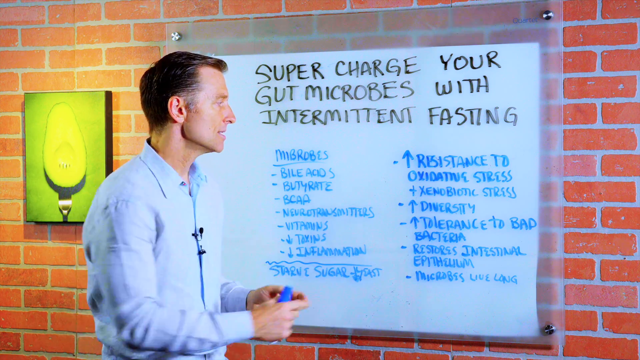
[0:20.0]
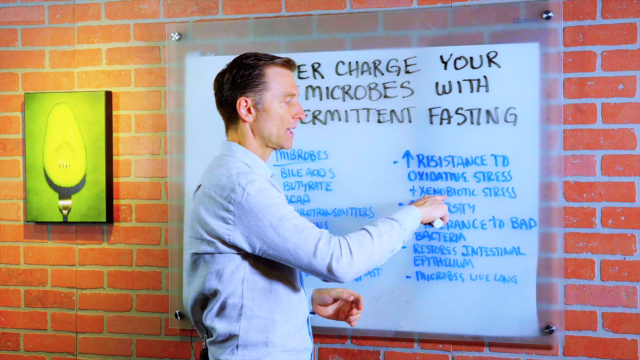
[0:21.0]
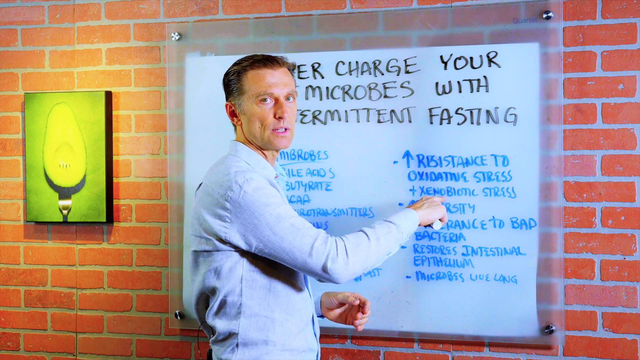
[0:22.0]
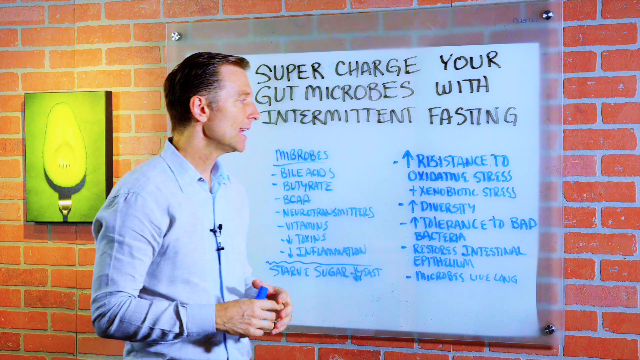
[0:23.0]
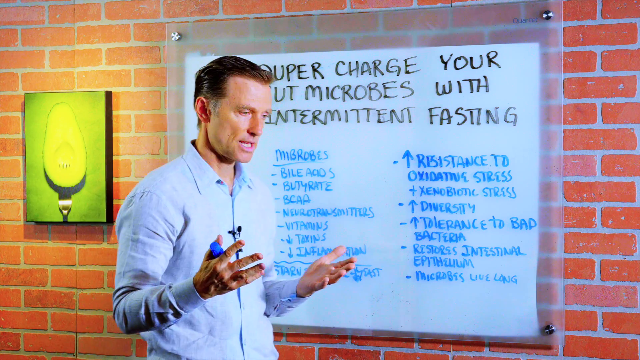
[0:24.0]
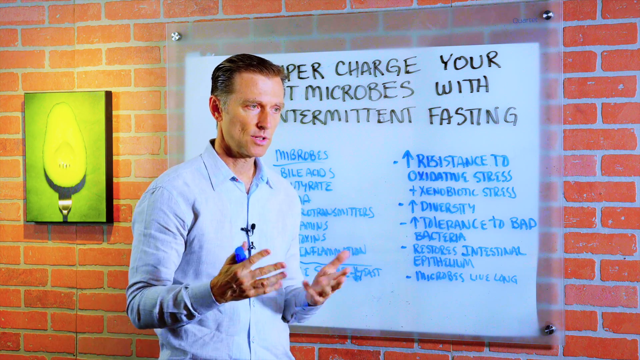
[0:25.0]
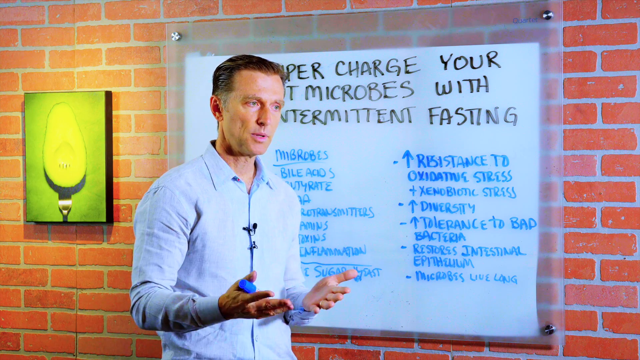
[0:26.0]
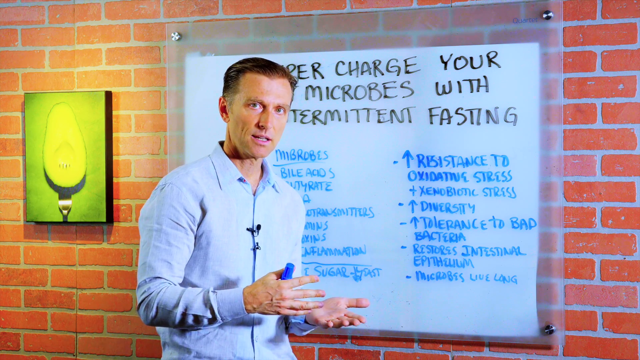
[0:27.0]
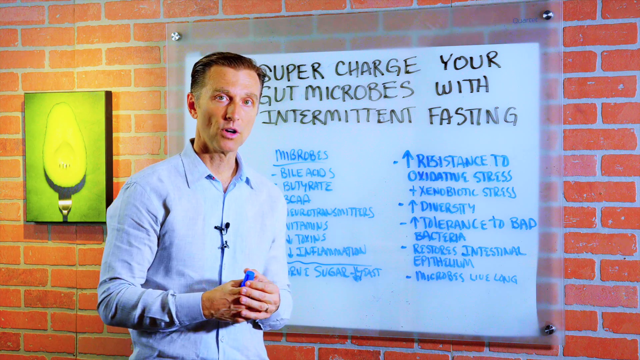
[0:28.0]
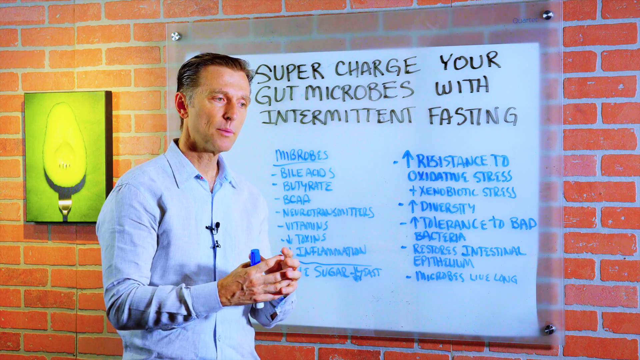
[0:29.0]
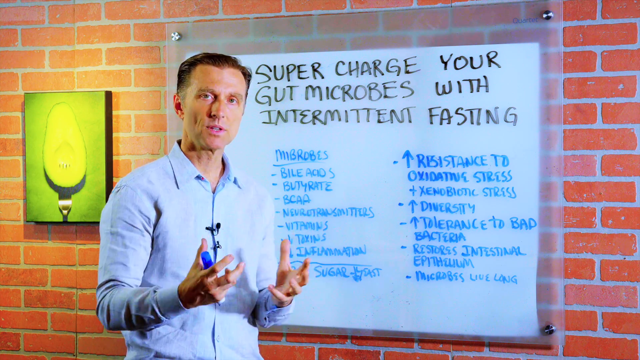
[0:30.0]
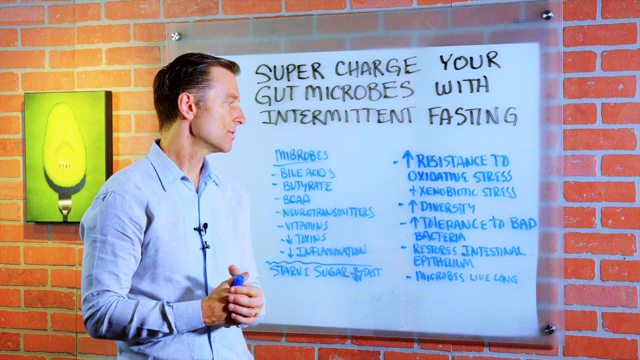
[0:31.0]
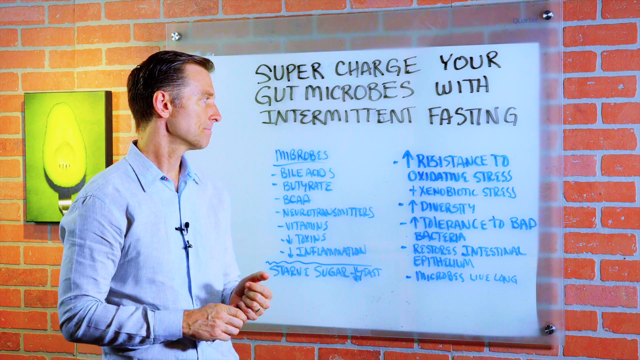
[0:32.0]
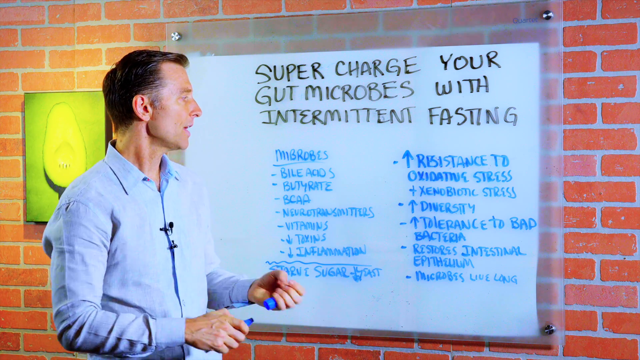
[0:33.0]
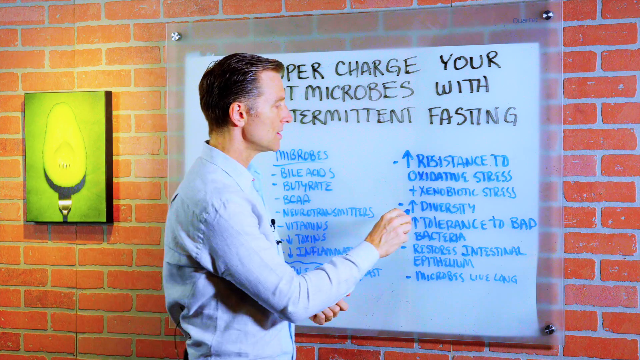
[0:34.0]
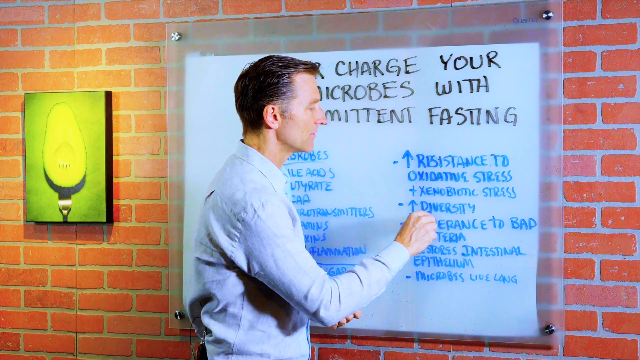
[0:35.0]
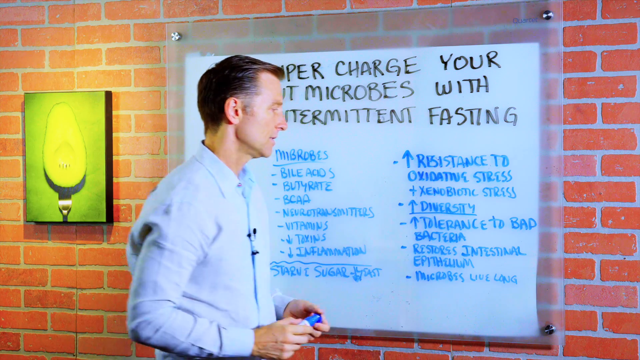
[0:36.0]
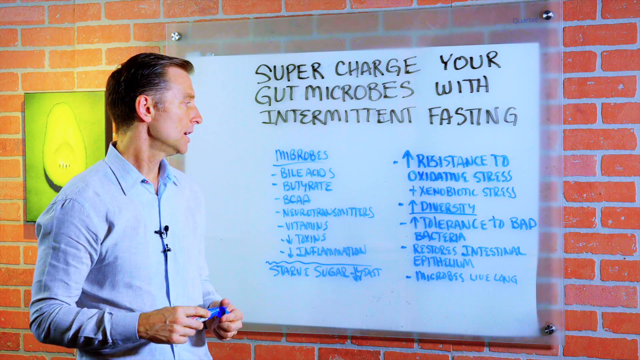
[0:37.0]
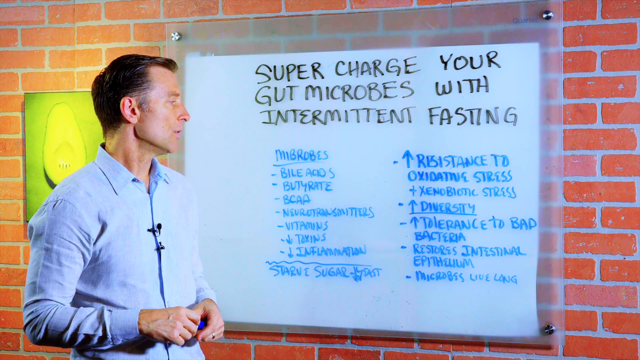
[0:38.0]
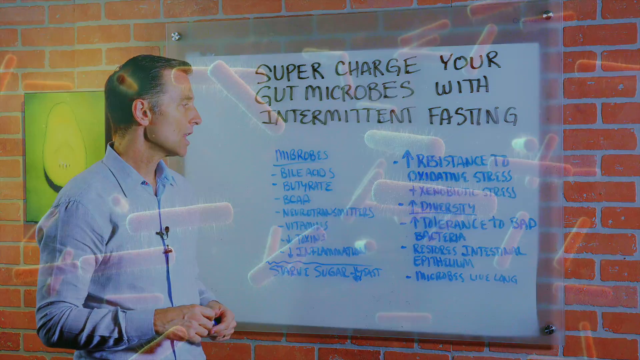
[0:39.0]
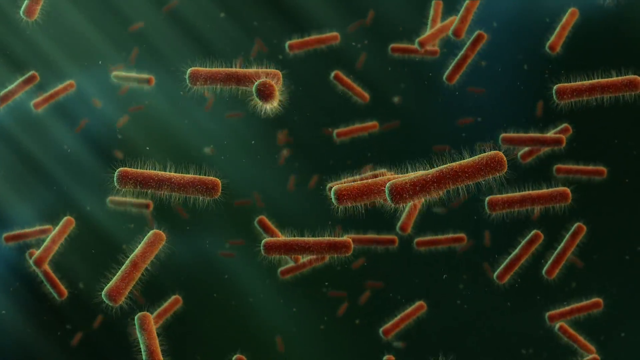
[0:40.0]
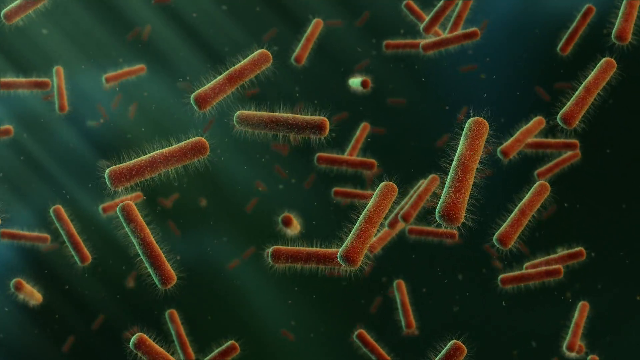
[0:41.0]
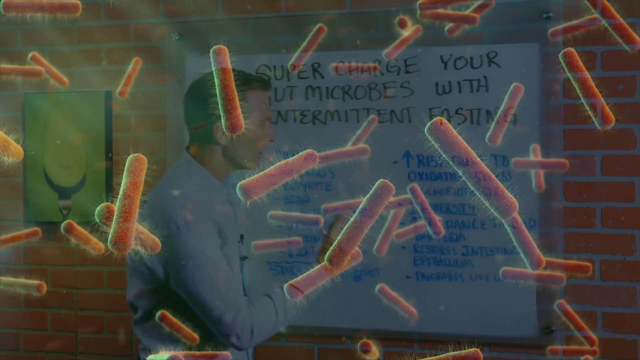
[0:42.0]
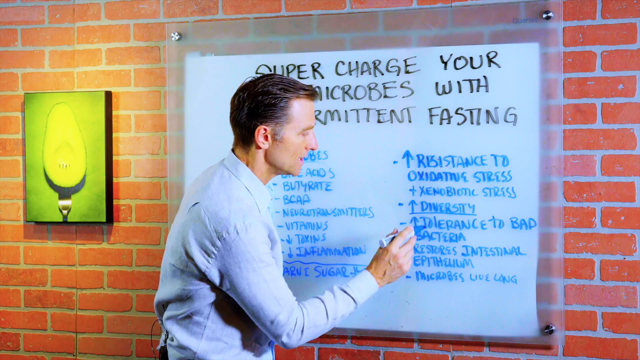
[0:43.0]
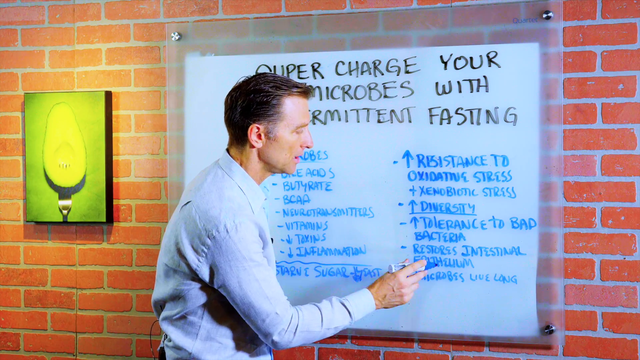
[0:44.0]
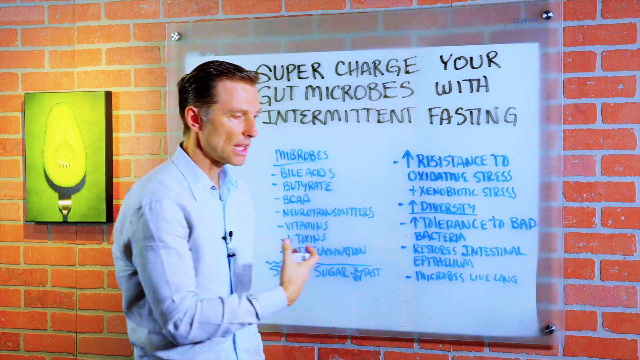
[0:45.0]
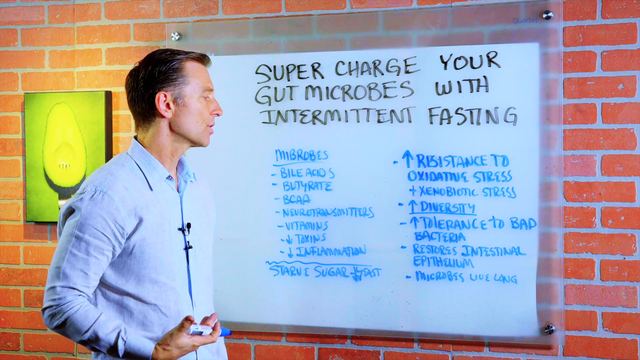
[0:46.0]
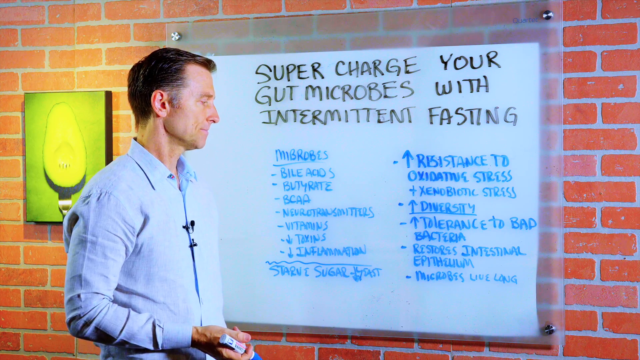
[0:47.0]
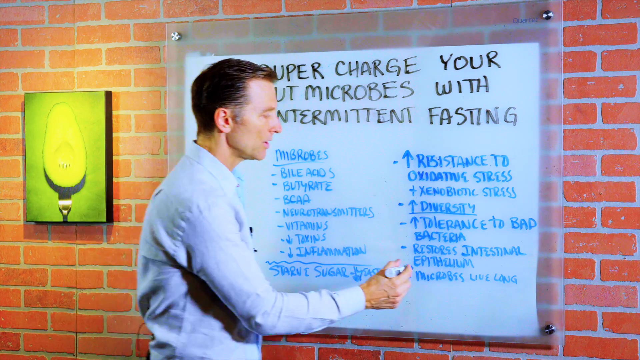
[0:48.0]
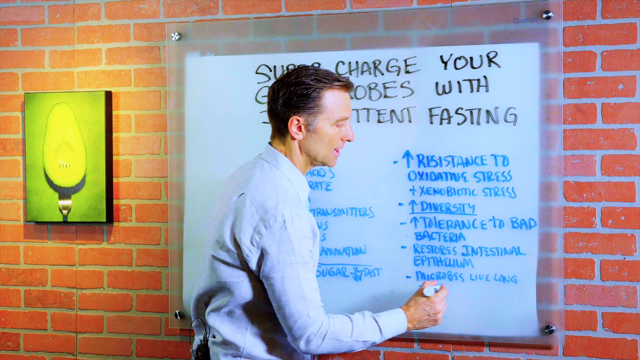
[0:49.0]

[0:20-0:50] A man in a pale blue shirt with a black microphone tucked to the front of his shirt stands beside a whiteboard on a red brick wall. On the left side is a rectangular artwork. He holds a blue ink marker. The whiteboard has a header in black capital letters reading "supercharge your gut microbes with intermittent fasting," and below it are two columns of more detailed information in blue text. The man touches the right-hand column as he speaks, looking at the camera, then gestures with his hand. He continues speaking, looking at the camera and then at the whiteboard, and underlines the word "diversity" on the whiteboard. As he speaks, the screen transitions to an animation of small cylindrical-looking red organisms floating against a dark gray background. The man appears again, this time touching the text that says "tolerance to bad bacteria," and continues speaking and gesturing with his hands.